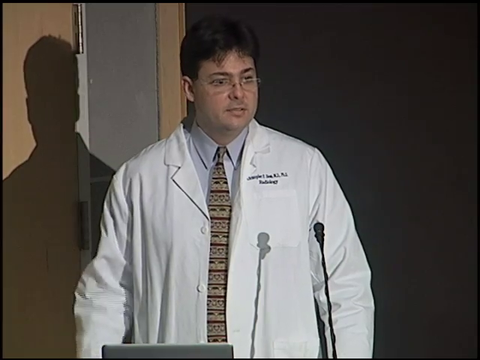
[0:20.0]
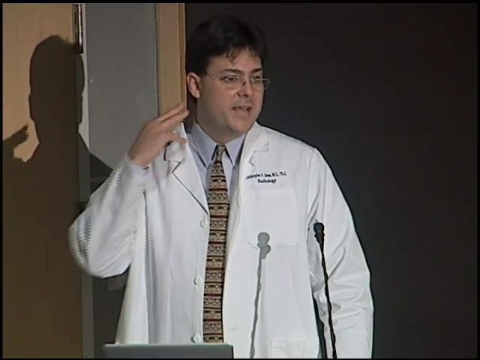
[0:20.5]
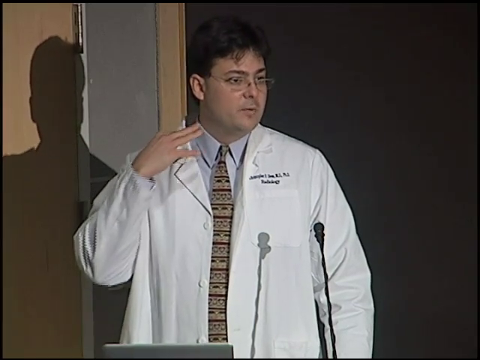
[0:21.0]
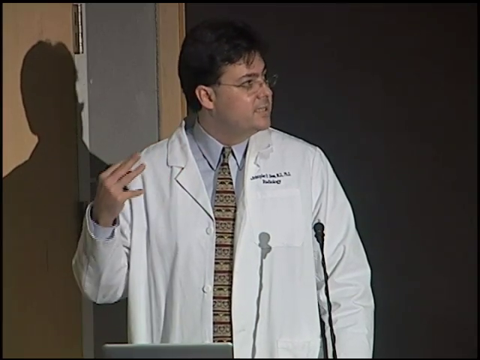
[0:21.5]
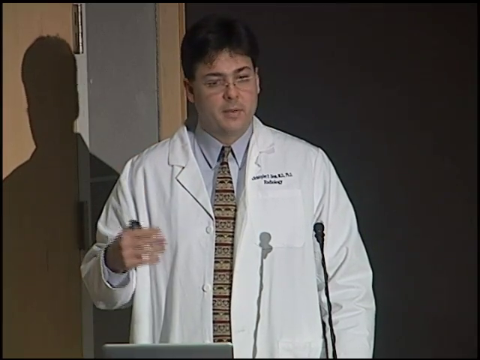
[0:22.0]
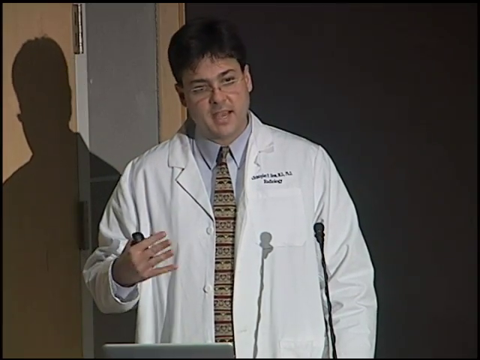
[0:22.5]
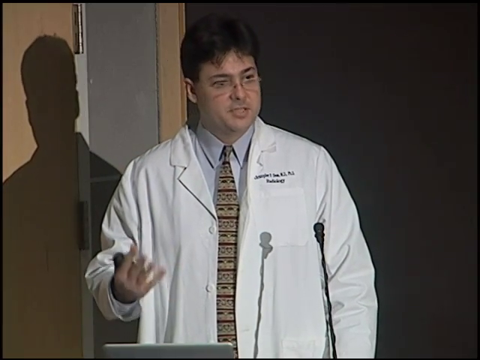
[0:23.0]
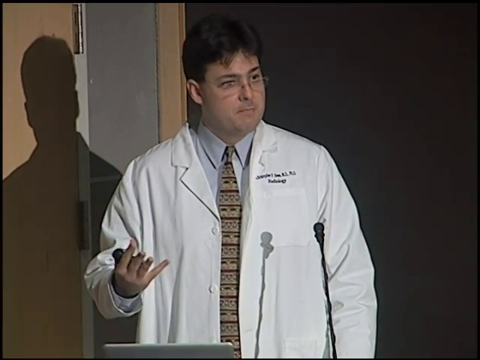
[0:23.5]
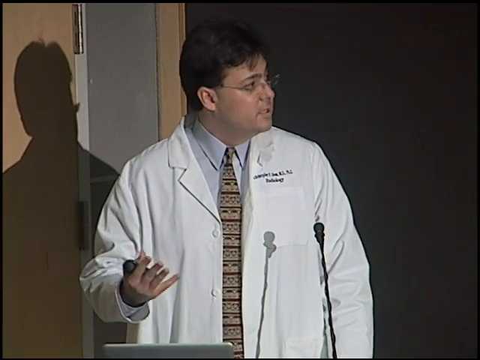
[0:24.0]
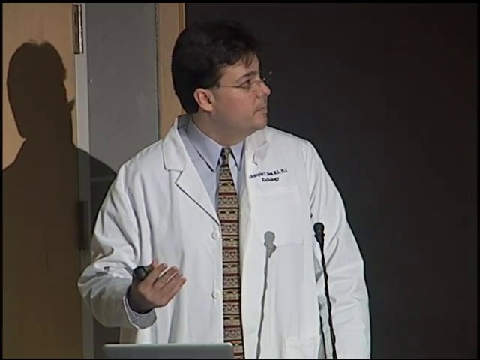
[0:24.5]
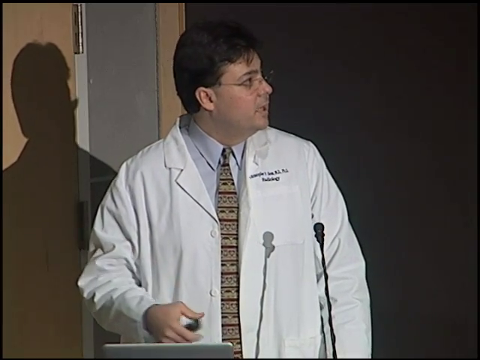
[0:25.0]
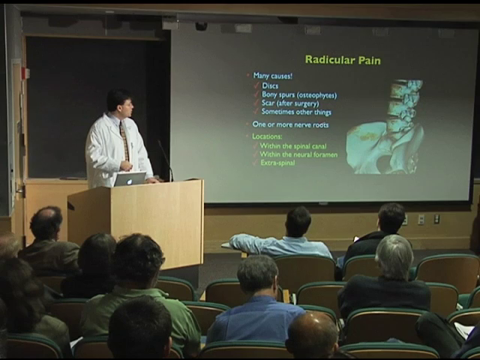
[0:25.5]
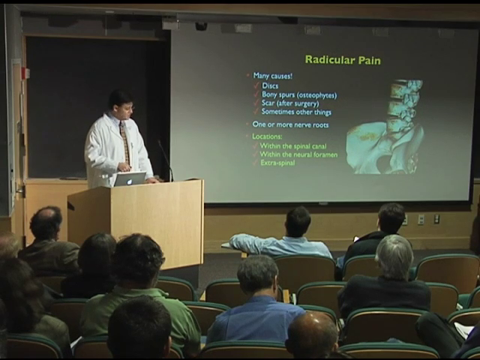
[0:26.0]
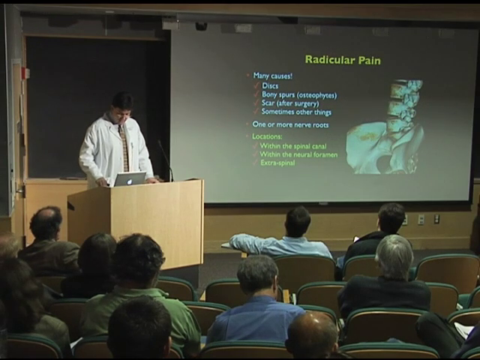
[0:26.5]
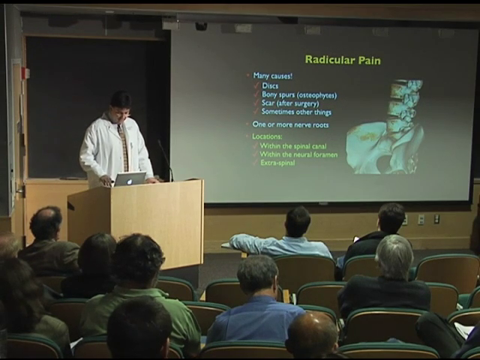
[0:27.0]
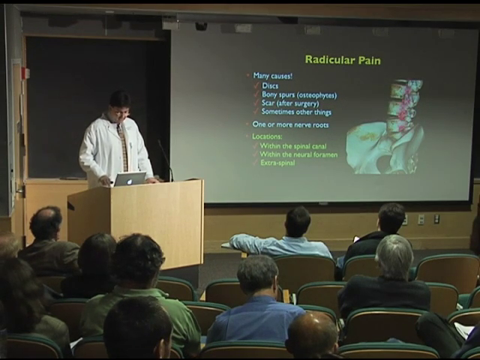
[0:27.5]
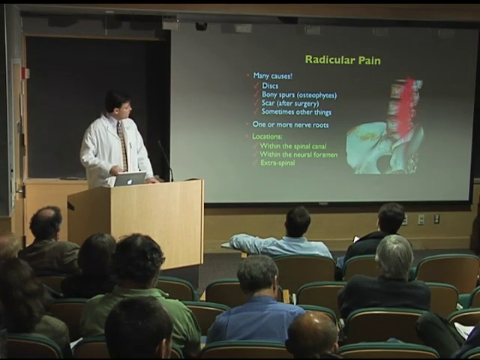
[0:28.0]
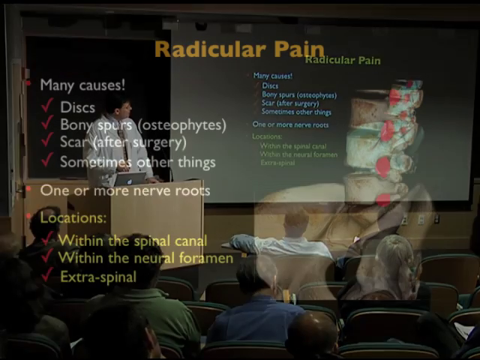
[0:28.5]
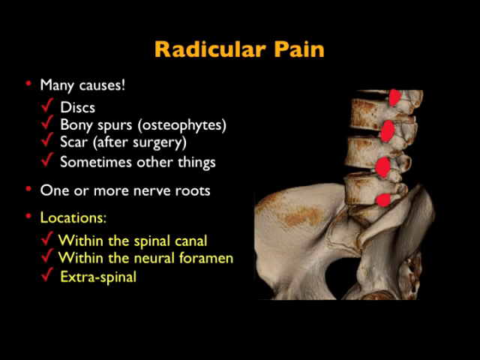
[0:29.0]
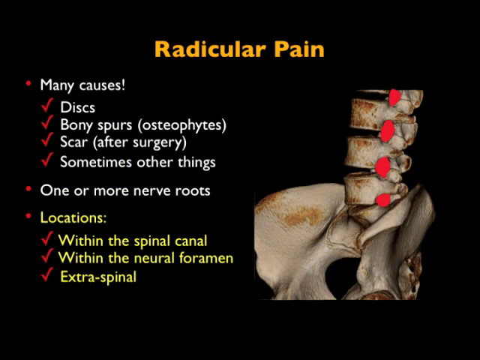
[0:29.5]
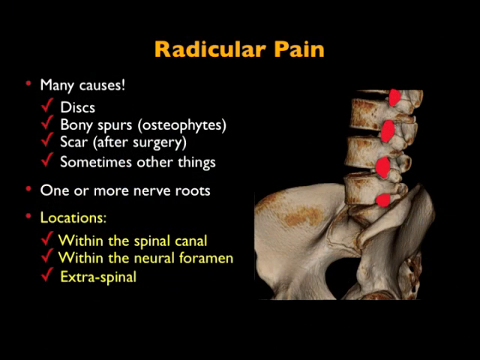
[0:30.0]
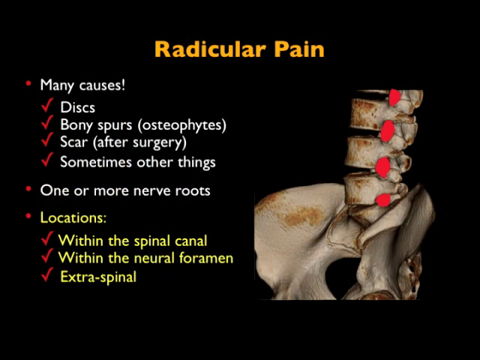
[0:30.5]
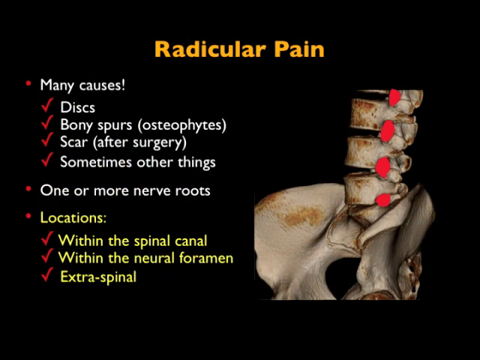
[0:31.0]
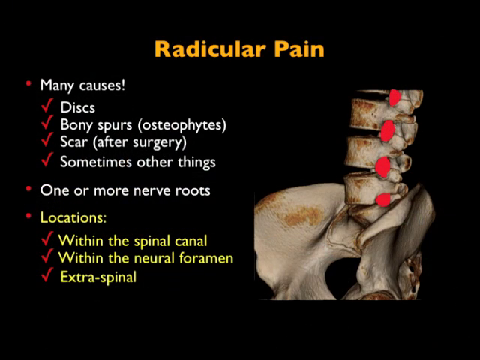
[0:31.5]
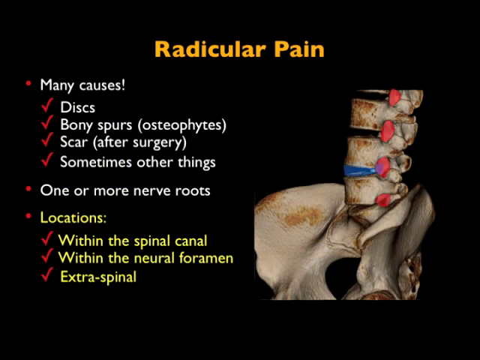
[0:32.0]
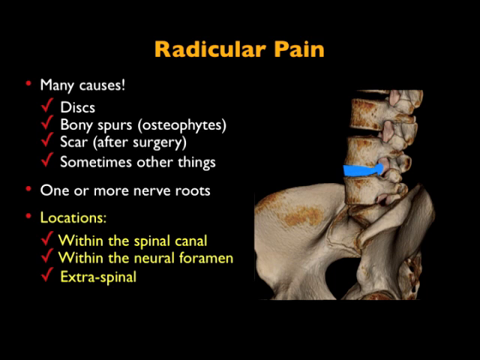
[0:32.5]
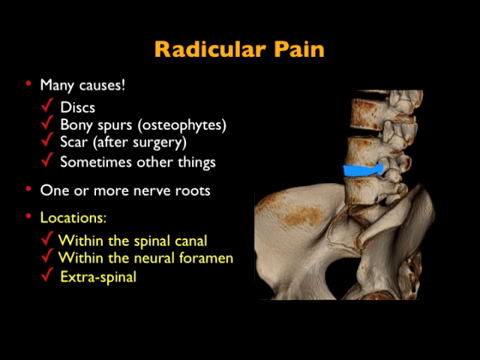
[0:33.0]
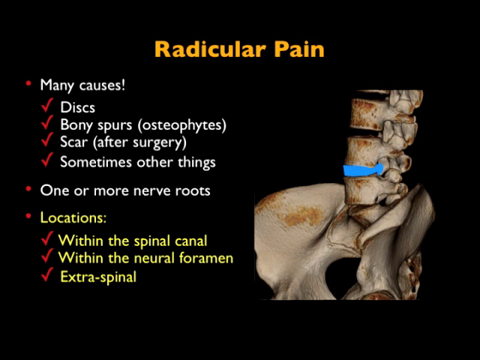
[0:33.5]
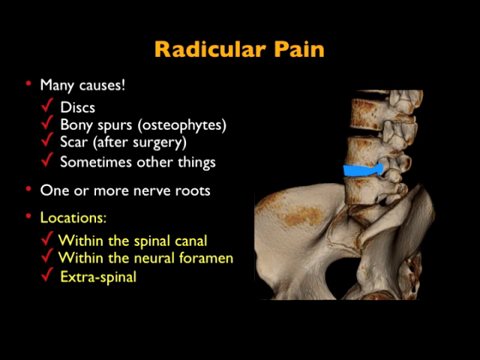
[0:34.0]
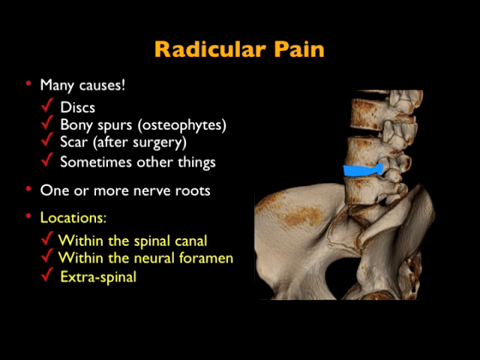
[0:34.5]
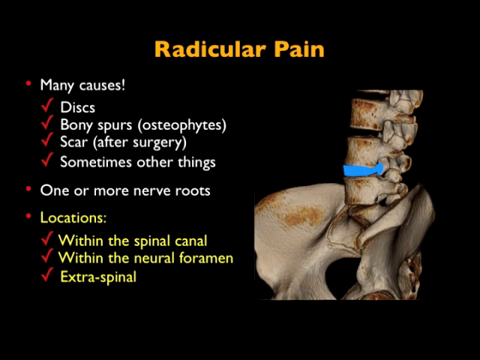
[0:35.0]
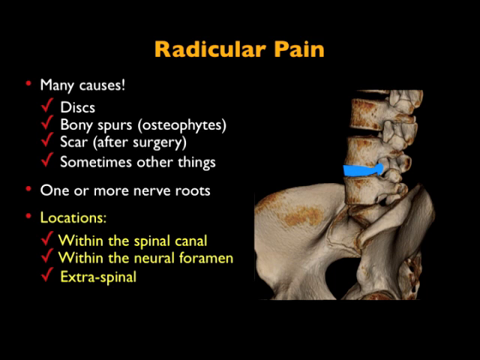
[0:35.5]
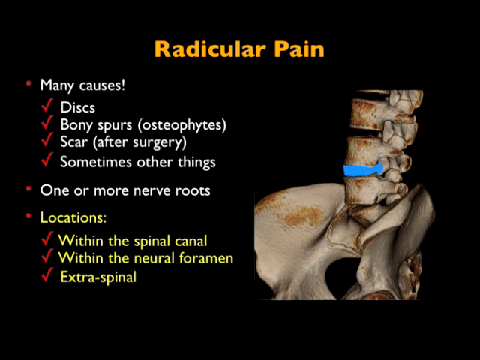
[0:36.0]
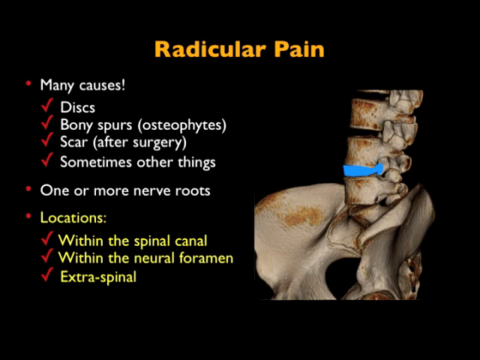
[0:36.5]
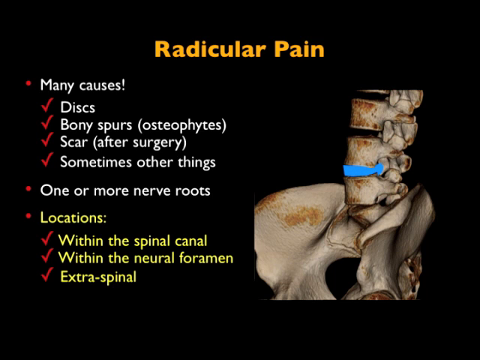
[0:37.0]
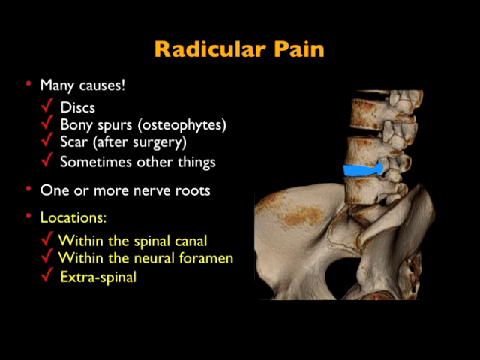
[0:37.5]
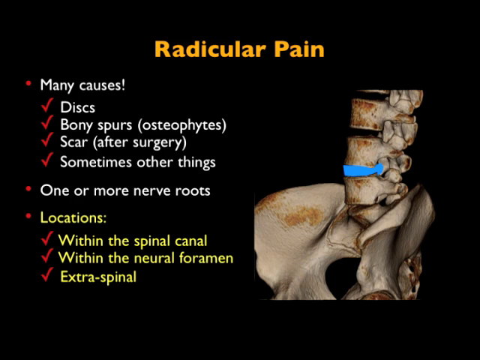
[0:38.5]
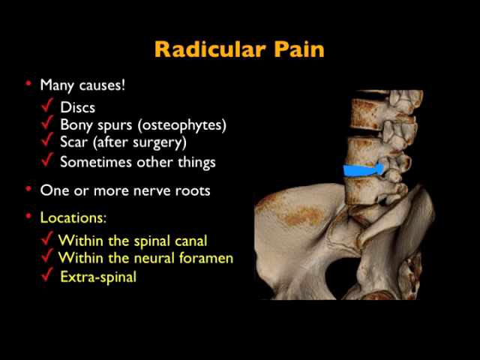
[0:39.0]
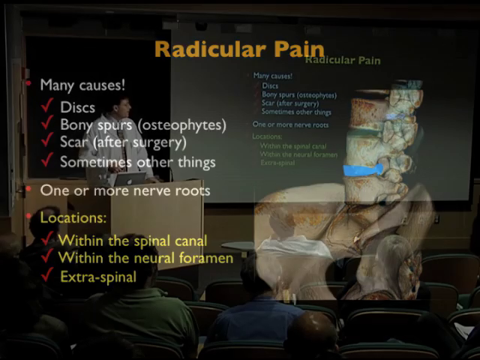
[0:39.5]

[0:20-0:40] Dr. Christopher P. Hess, MD, stands behind the podium, speaking into a microphone. He is a heavy-set man with short brown hair and glasses, wearing a white lab coat, a gray button-up shirt, and a golden-black striped tie. He holds two fingers up to his neck as he speaks, then waves his hand and continues speaking to his listeners. The video cuts back to a wide shot of Dr. Hess behind the podium, standing next to a screen, with an audience of people sitting in chairs visible in the foreground, observing his presentation. The words "RADICULAR PAIN" appear at the top of the screen, and an image of a damaged spine is shown on the right side. The screen says that radicular pain has many causes, including discs, bony spurs, scars, and sometimes other things, and that it can occur within the spinal cord and within the neural foramen. The view then closes up on the screen Dr. Hess is showing, where a blue arrow highlights a section of the spine image.